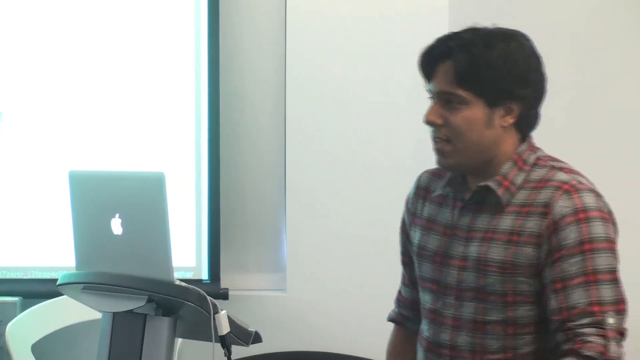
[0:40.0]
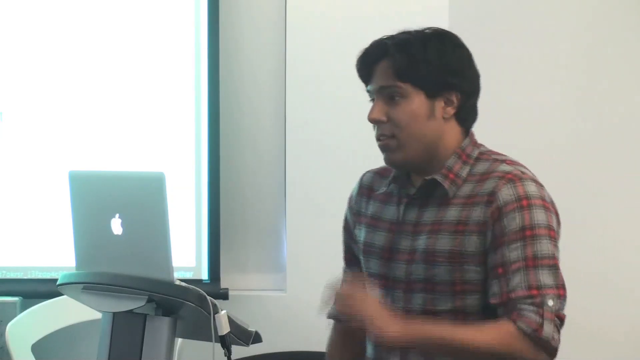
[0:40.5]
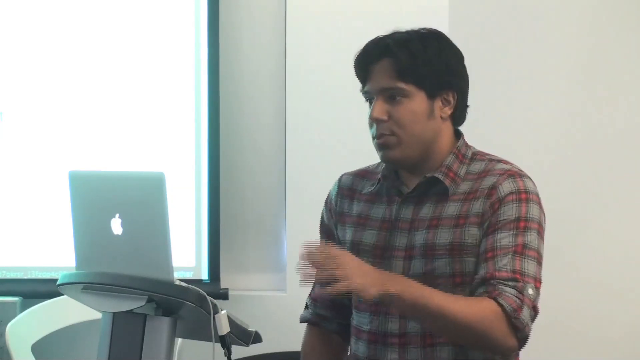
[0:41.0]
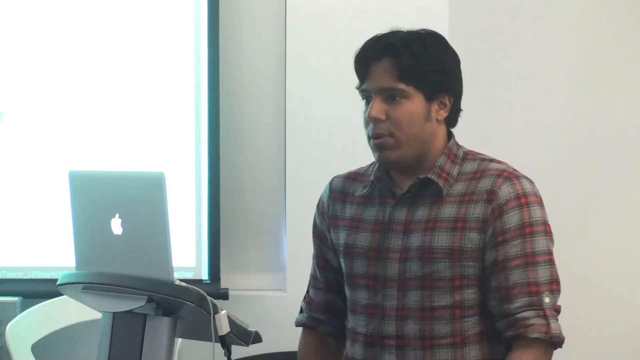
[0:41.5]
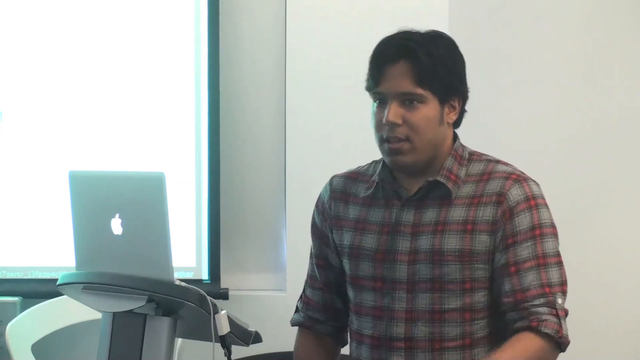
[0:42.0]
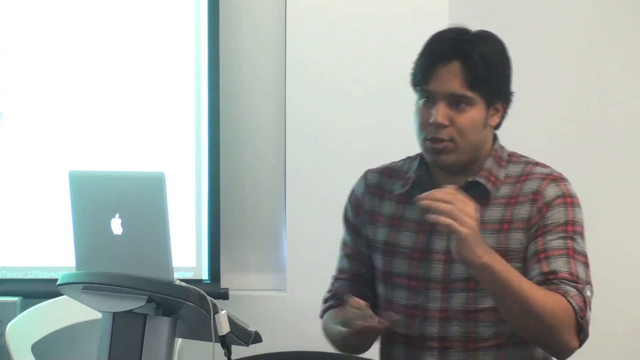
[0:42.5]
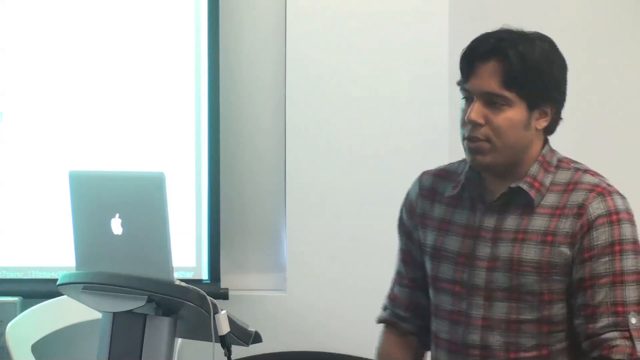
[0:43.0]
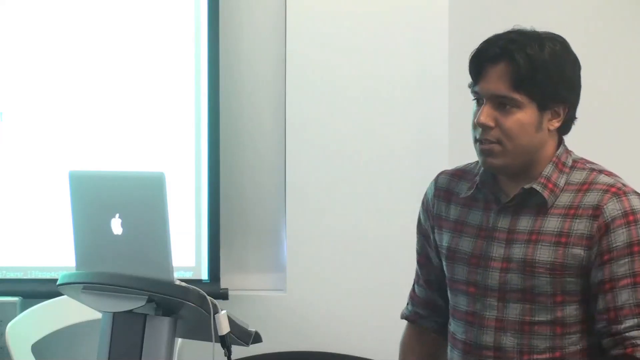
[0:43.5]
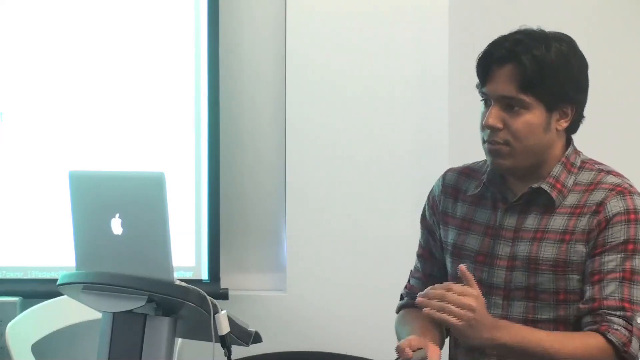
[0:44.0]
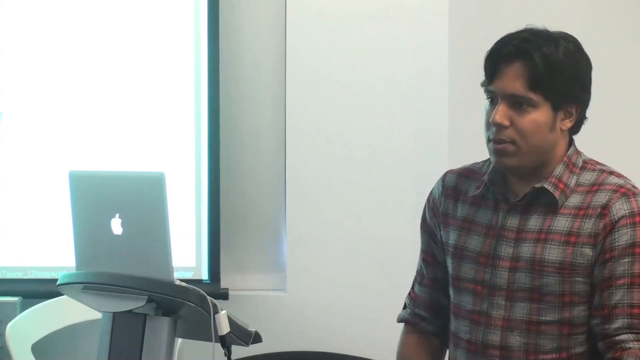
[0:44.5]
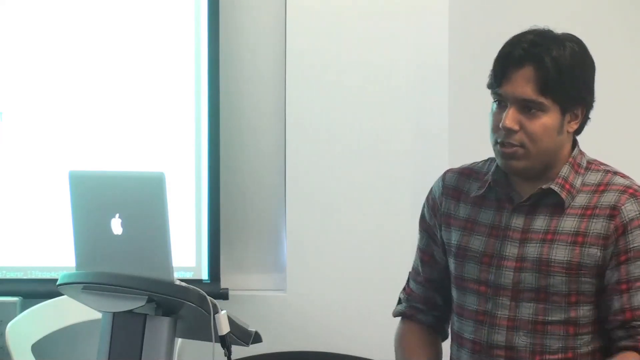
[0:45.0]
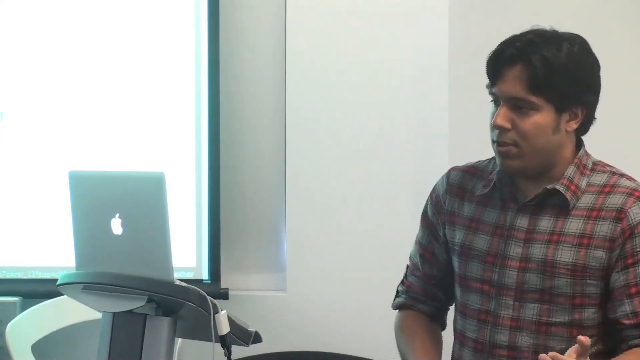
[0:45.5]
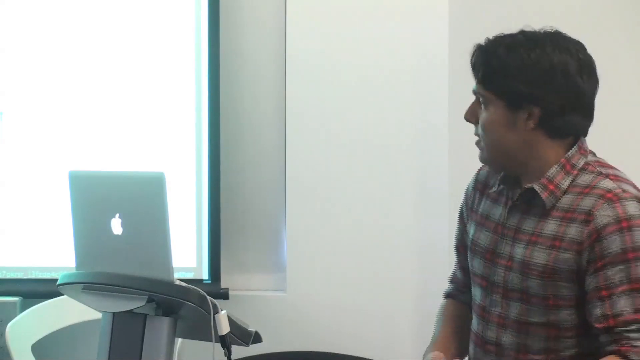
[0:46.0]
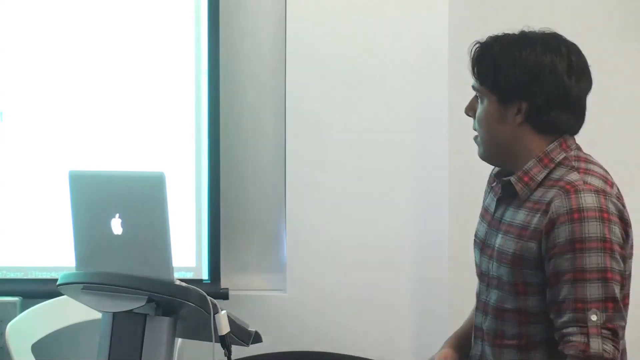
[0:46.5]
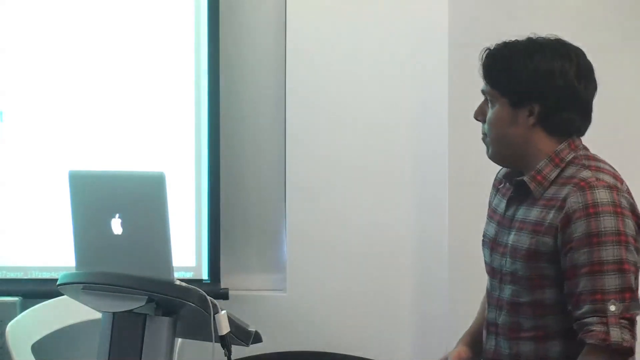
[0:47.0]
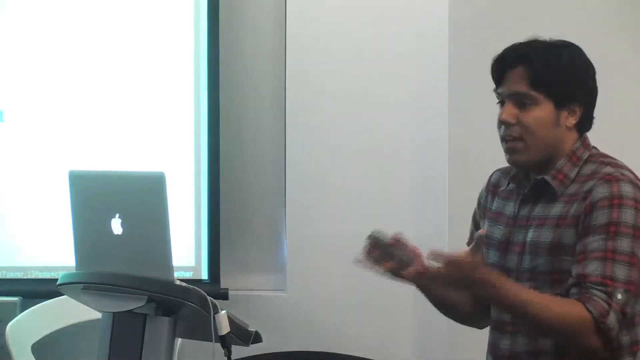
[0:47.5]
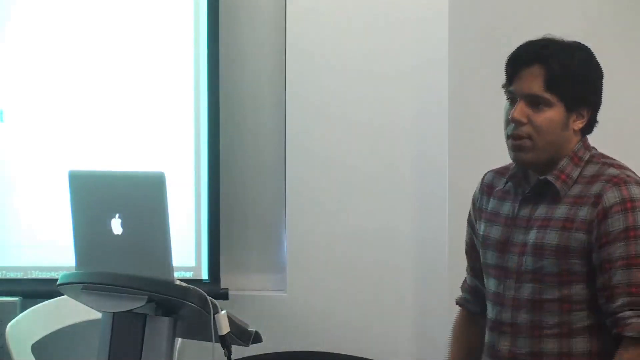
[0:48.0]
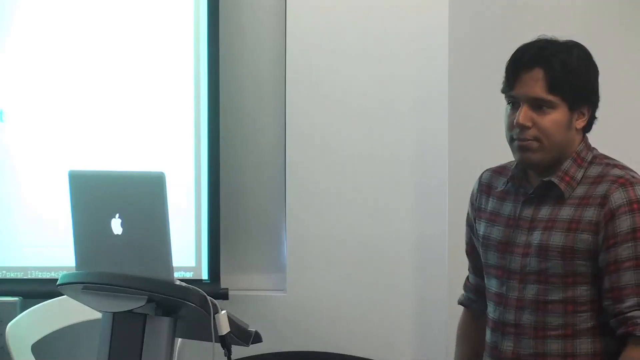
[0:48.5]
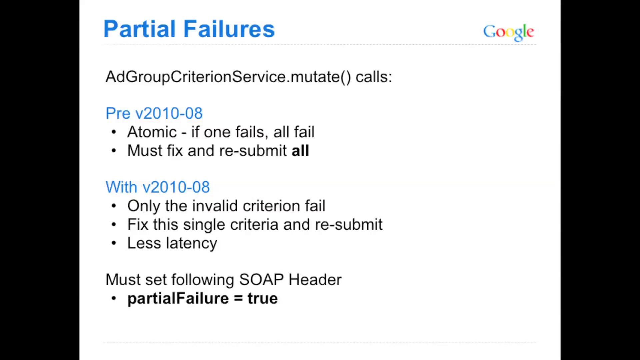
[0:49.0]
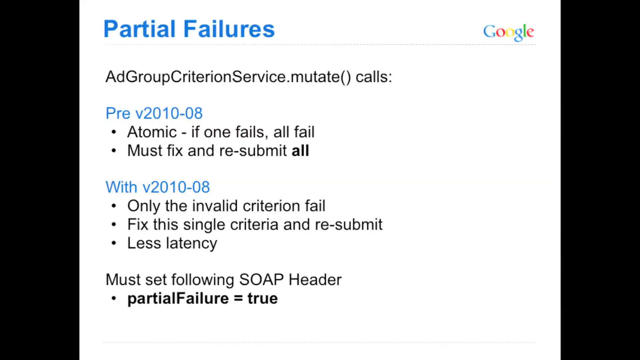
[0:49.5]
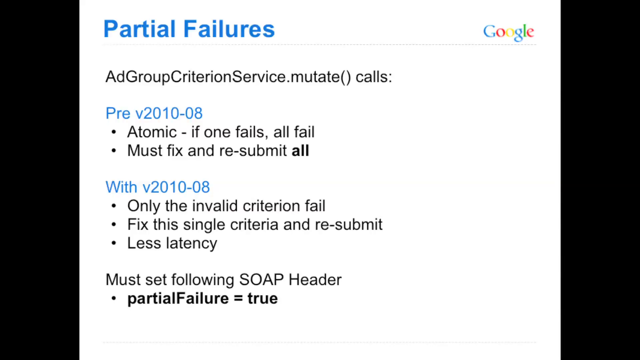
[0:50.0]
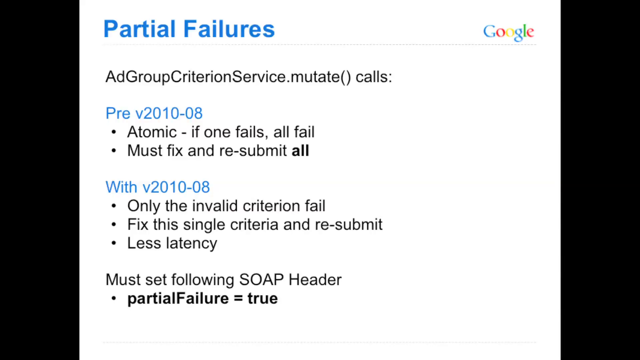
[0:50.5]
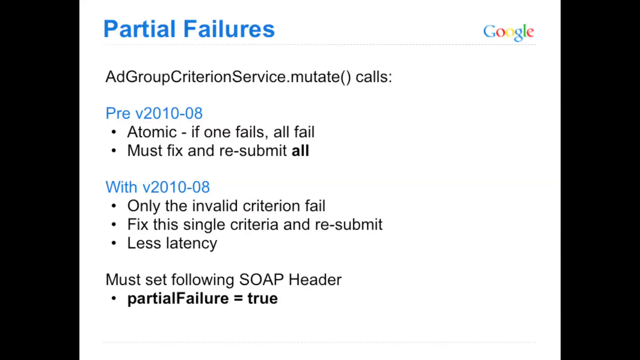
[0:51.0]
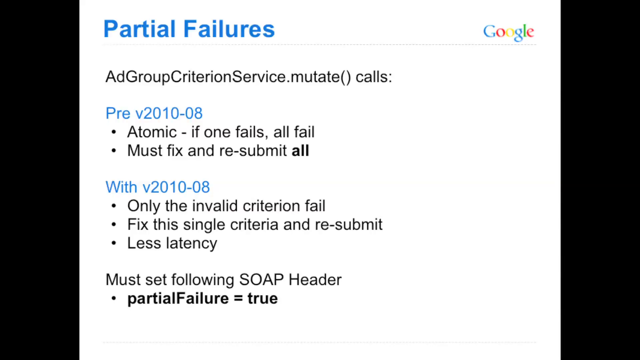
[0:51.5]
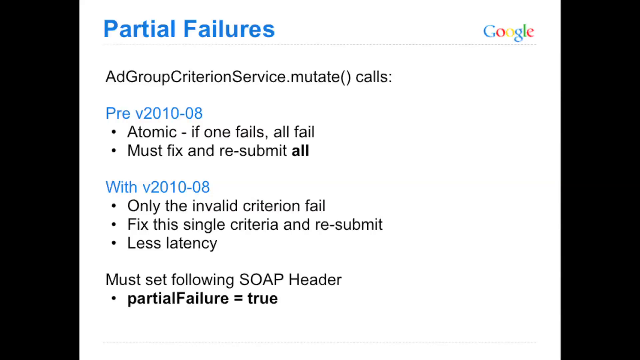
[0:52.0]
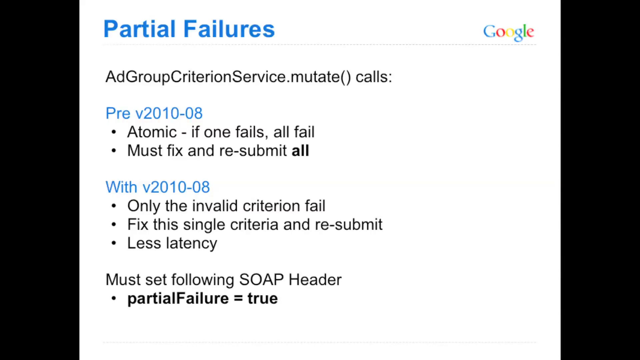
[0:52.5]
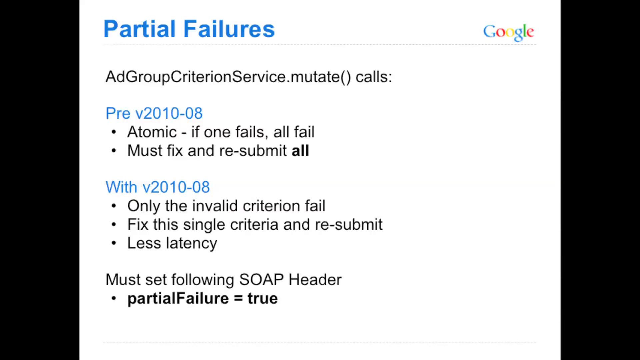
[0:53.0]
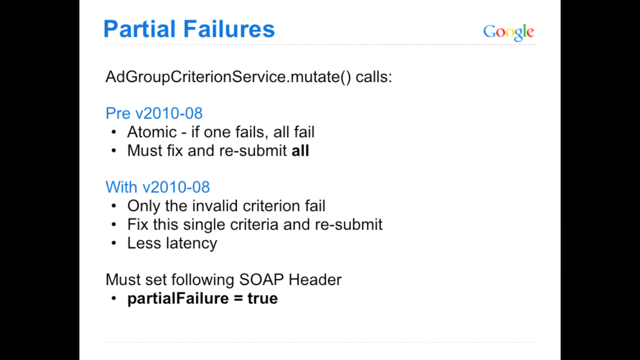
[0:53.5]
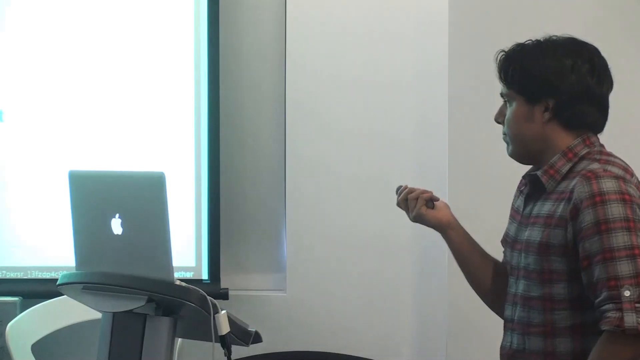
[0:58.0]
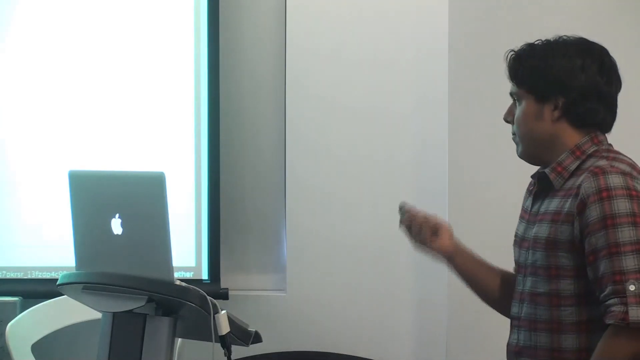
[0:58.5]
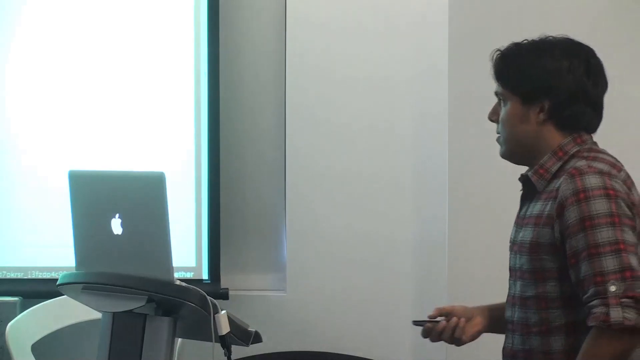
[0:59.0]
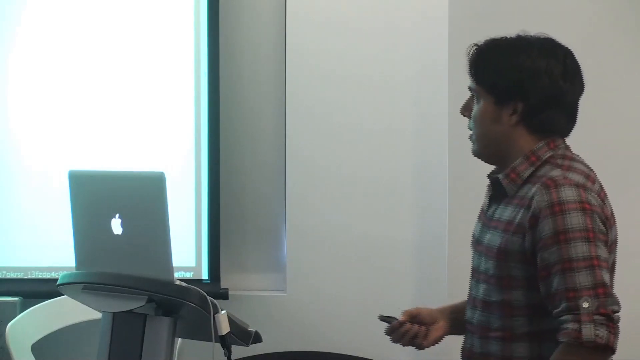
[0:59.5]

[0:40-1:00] The presenter is seen from a side view, gesturing with the left hand this time. He seems to be looking at multiple people, his eyes meeting different sections of the room as if paying attention to them and gesturing to them, possibly also making head gestures. The camera pans back to the "partial failures" document, which still shows the same title and information. It then pans to the man, who raises his right hand and uses the device, looking like he is clicking a button. He extends his pinky finger and is kind of pointing at the screen as he gestures.